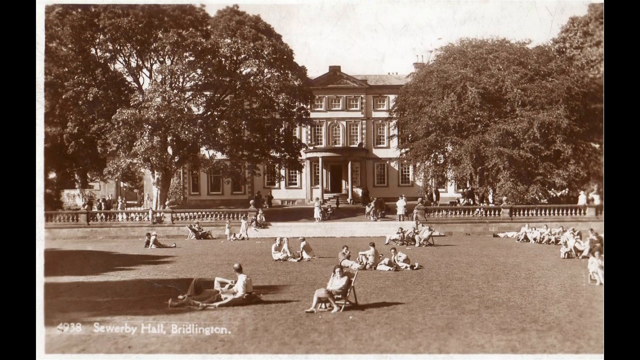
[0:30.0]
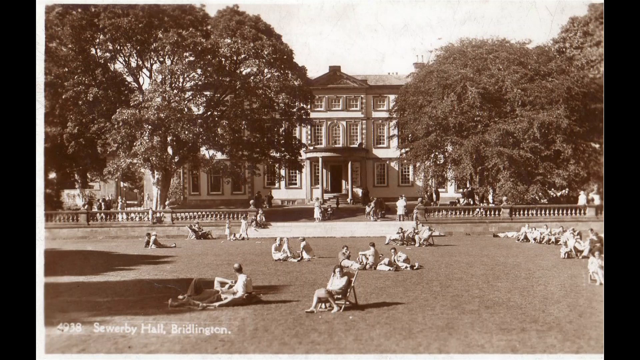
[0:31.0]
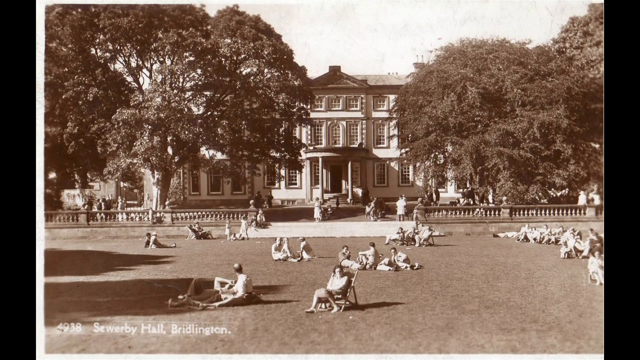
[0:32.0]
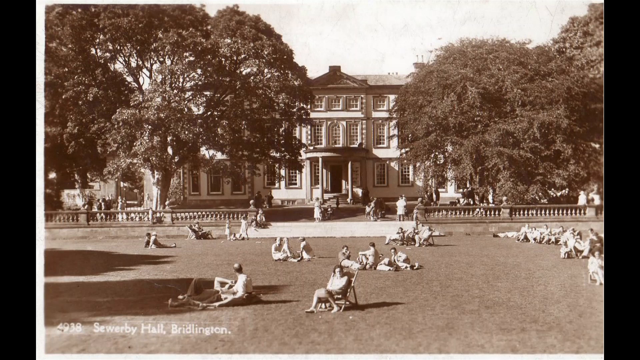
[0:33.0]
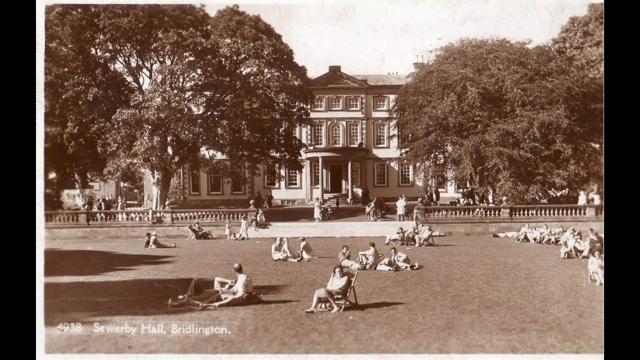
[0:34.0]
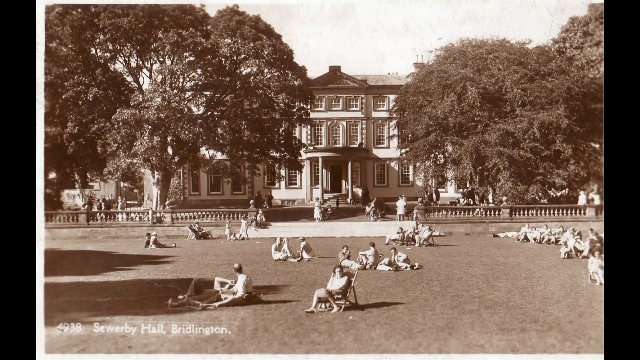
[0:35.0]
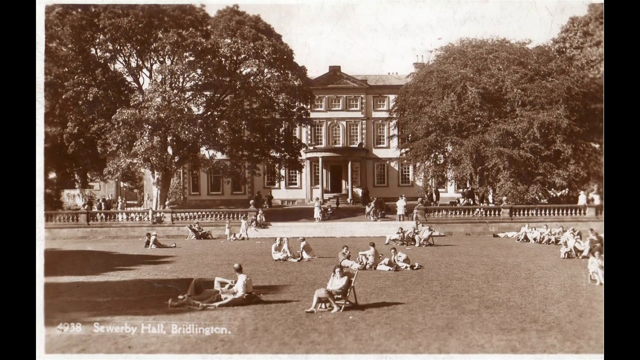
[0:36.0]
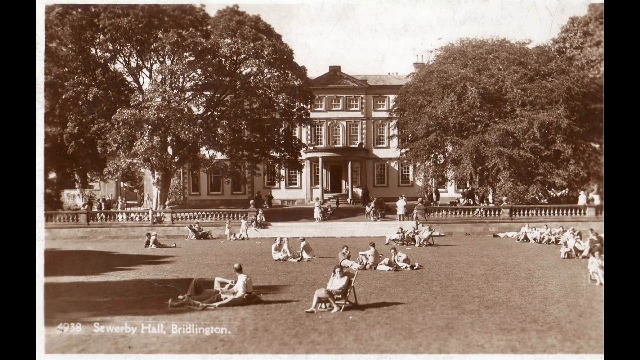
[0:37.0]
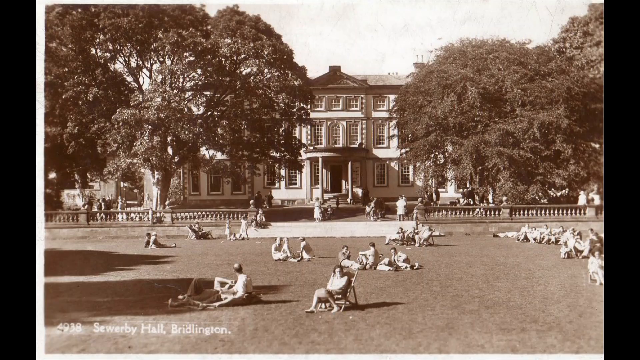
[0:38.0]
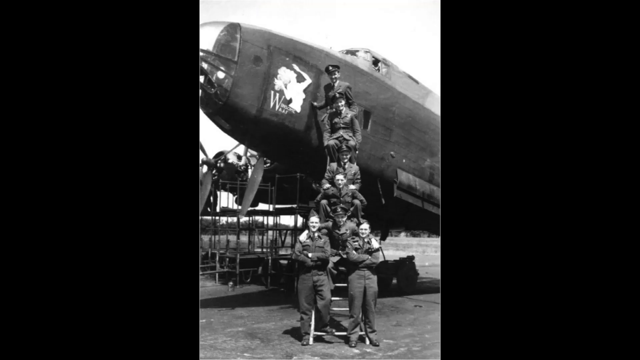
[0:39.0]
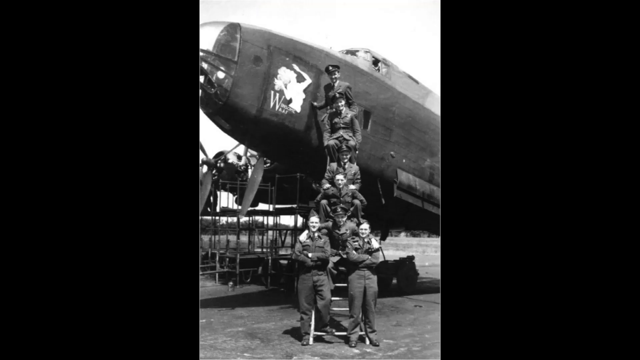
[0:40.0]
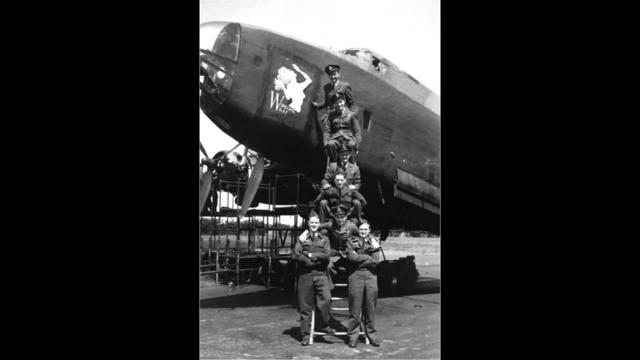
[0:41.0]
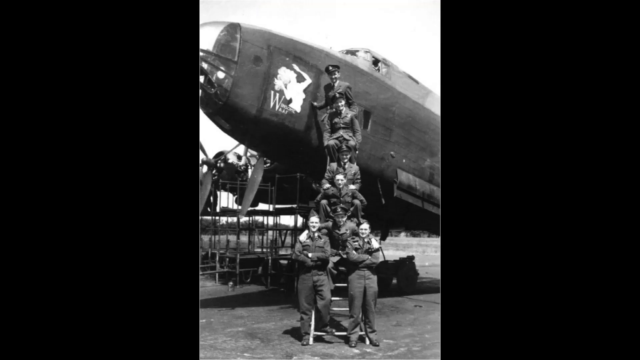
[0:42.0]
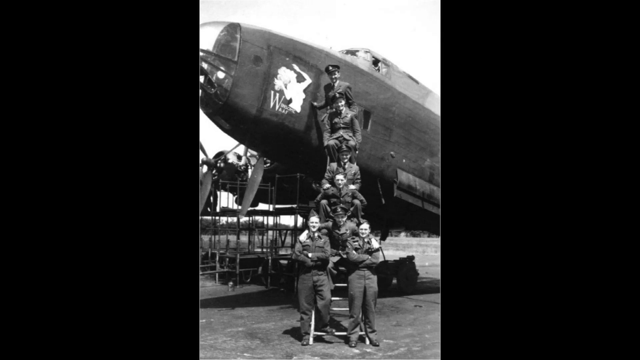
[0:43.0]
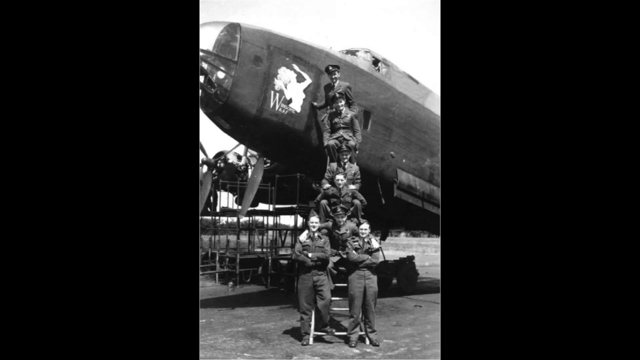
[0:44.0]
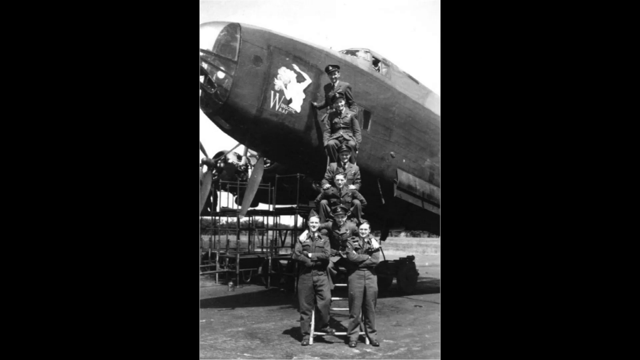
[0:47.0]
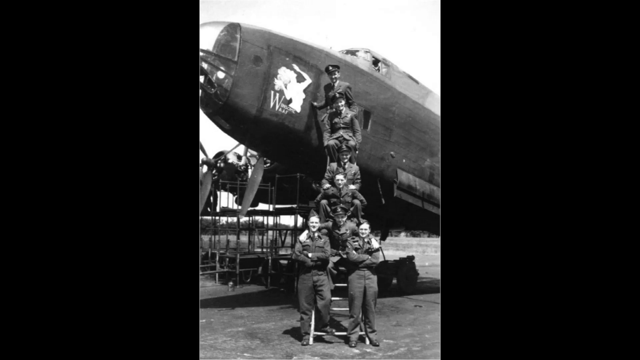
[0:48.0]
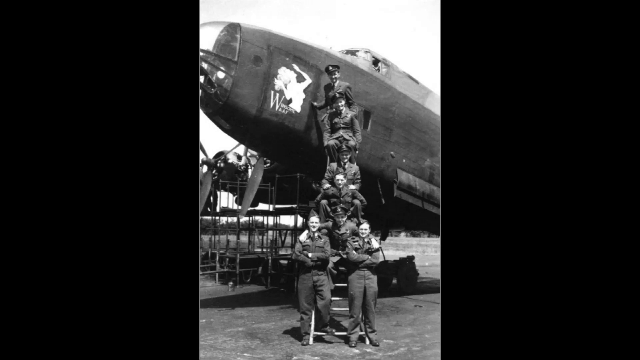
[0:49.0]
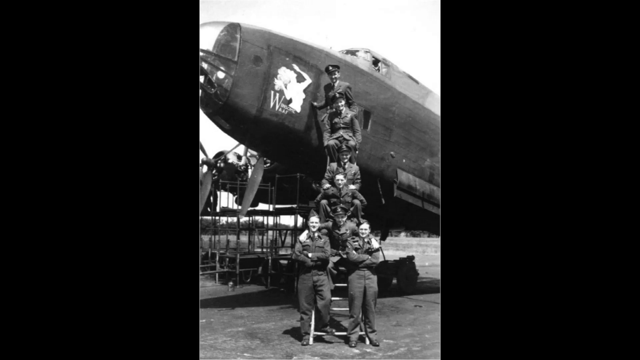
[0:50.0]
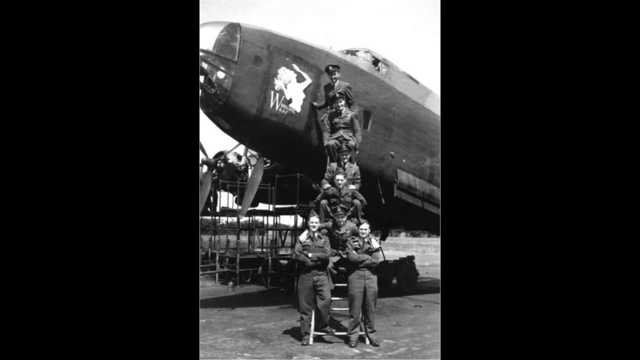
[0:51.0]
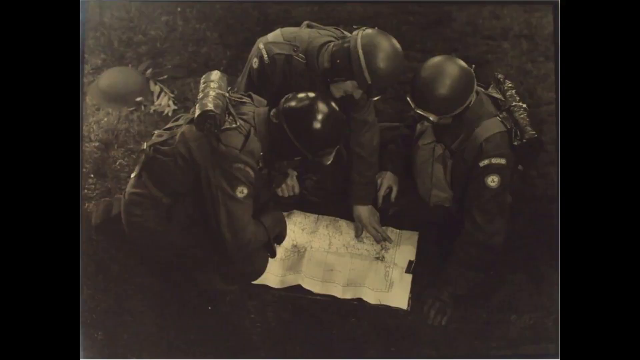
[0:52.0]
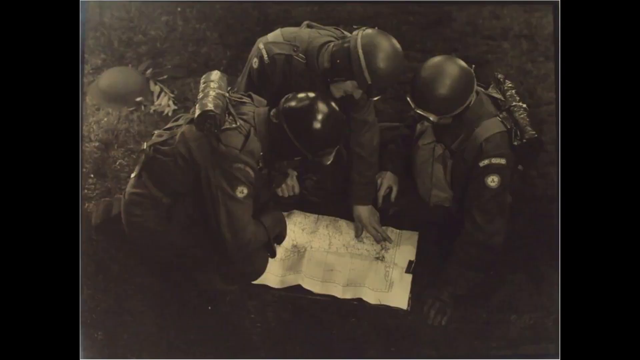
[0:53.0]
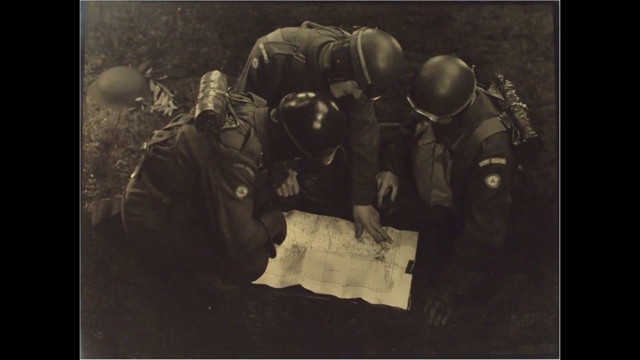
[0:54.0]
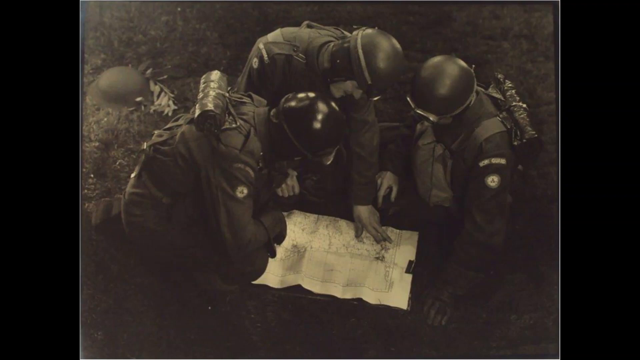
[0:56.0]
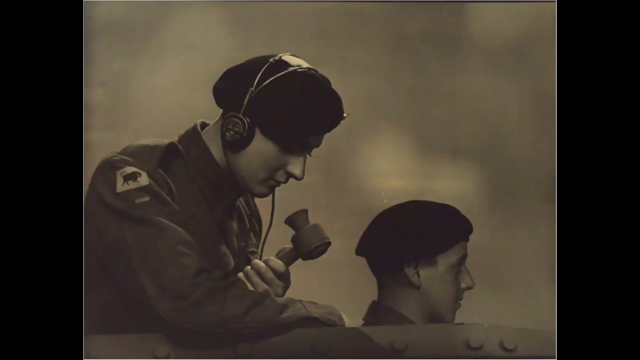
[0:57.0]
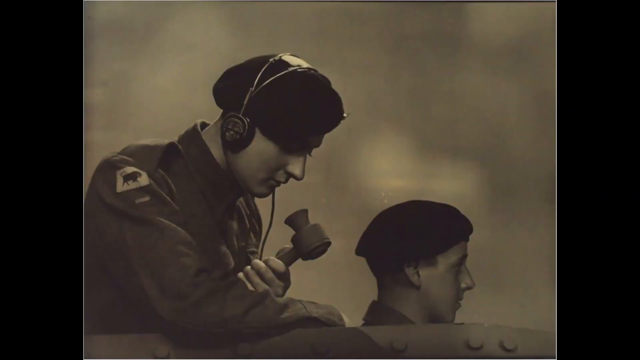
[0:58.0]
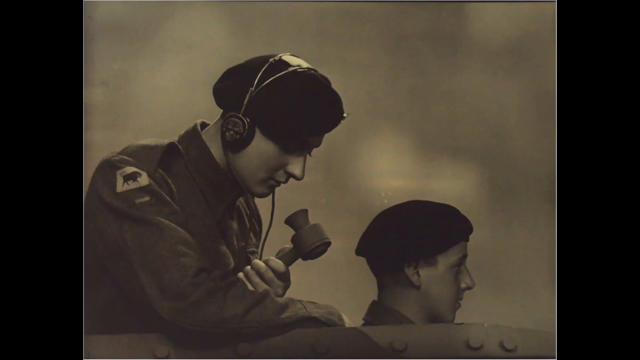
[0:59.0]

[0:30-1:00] A large black and white photograph shows what looks to be a school setting: a large, very old-looking three-story building, apparently built around the 1800s. On the front lawn are students, possibly college students or students of this school, enjoying themselves. Some are lying down, some are sitting in chairs, some are in mixed groups and some are alone. Two large trees are in front of the school, and there is a small entryway into the building. The photograph shows "4938" and "Sewerby Hall, Bridlington". Another photograph follows, showing an airplane from around the World War I era with pilots, all in military uniform. Seven of them are on a ladder, from the top to the bottom, and two of them look to be female. On the old airplane is a picture of a shapely lady looking up into the air.